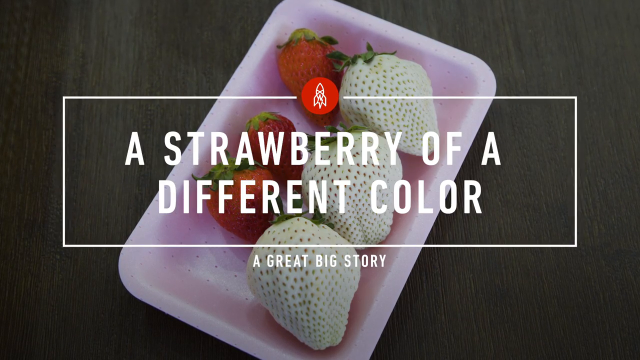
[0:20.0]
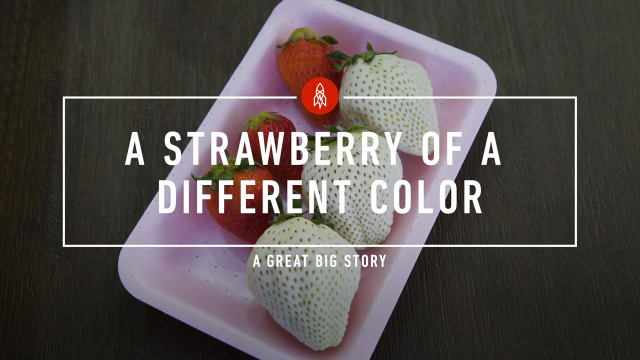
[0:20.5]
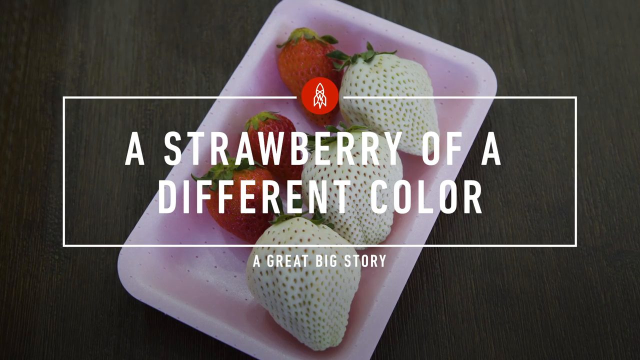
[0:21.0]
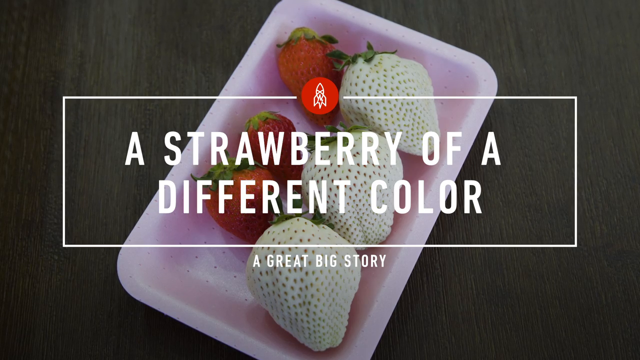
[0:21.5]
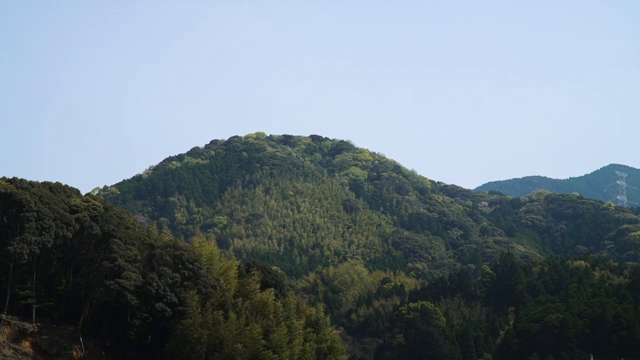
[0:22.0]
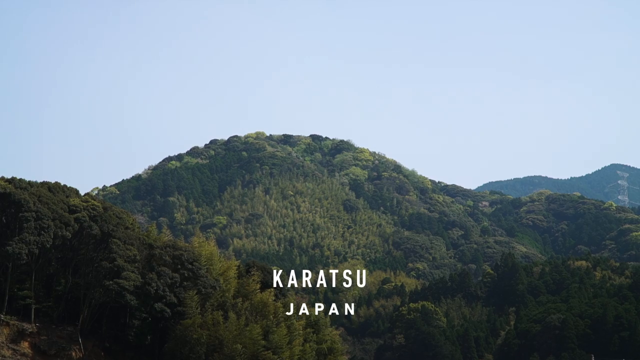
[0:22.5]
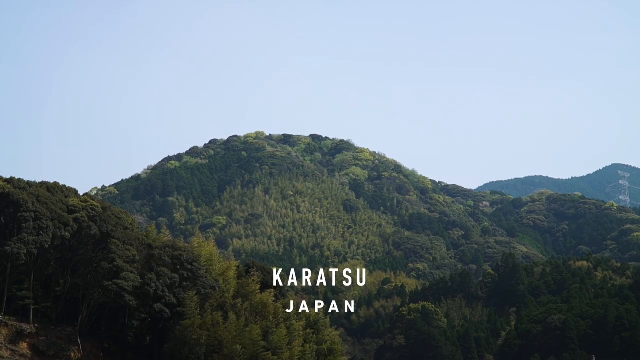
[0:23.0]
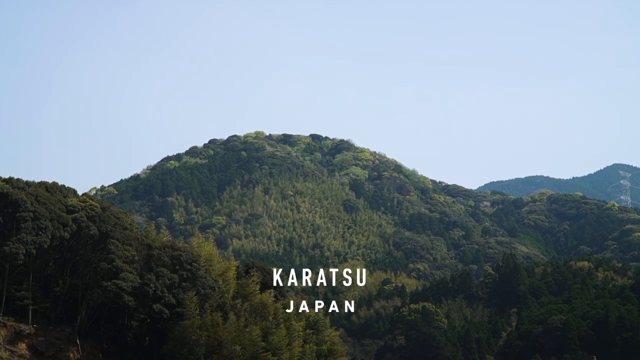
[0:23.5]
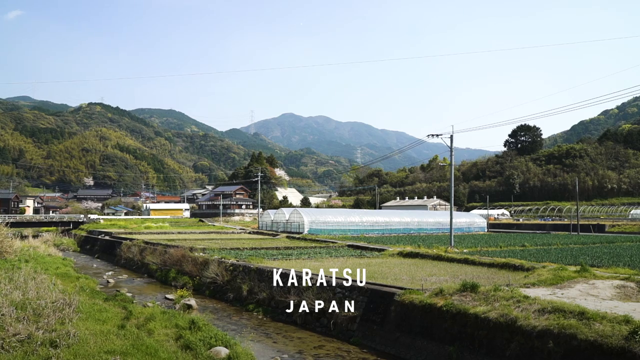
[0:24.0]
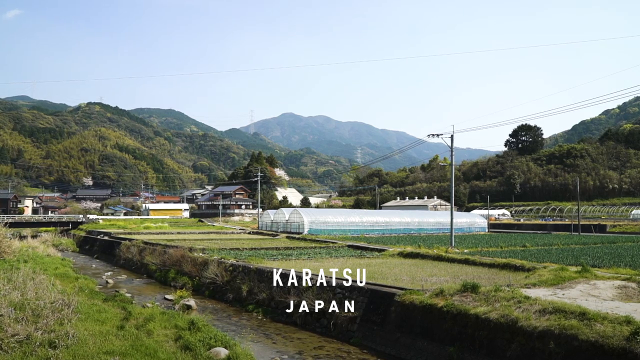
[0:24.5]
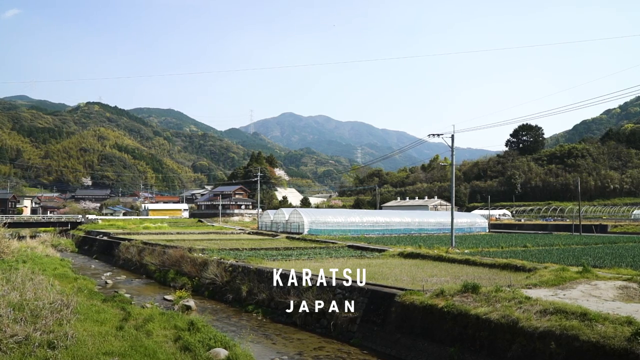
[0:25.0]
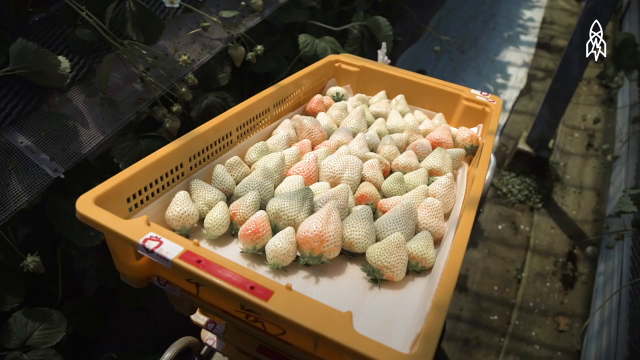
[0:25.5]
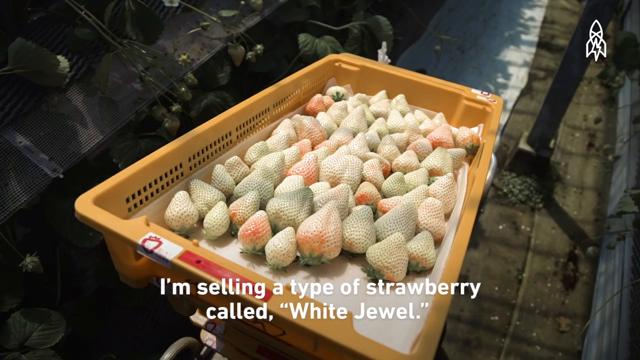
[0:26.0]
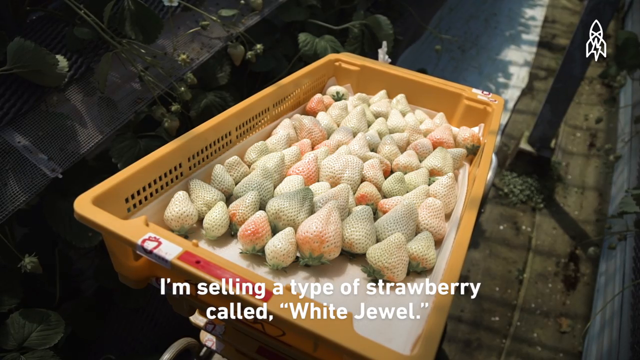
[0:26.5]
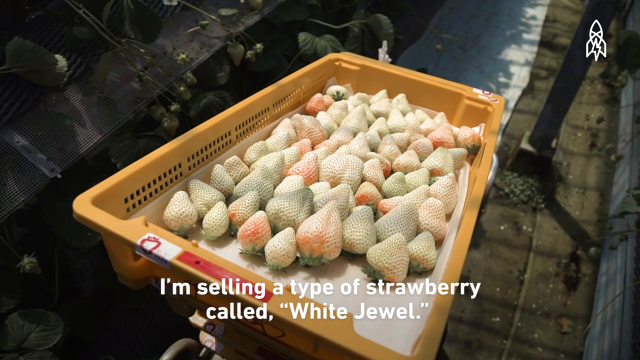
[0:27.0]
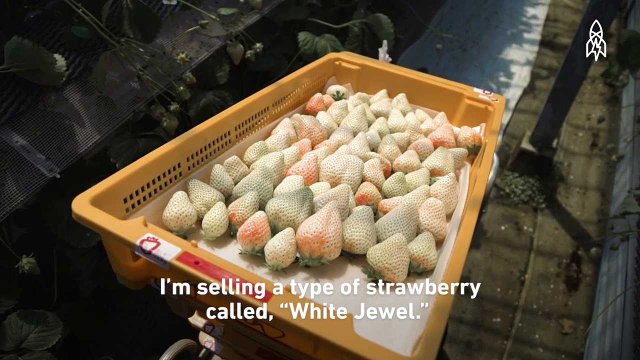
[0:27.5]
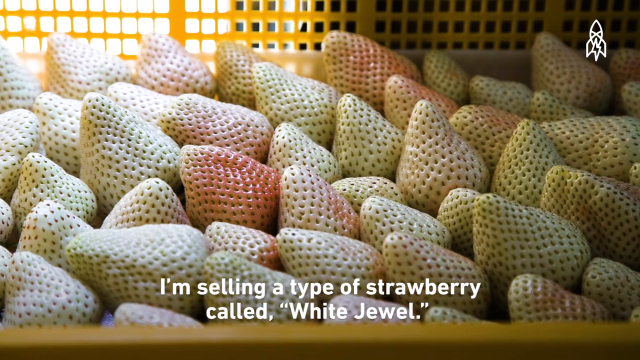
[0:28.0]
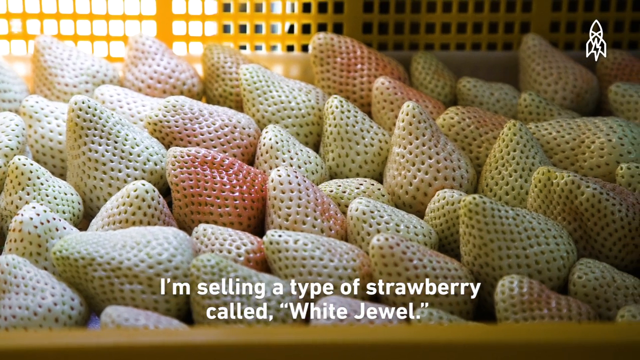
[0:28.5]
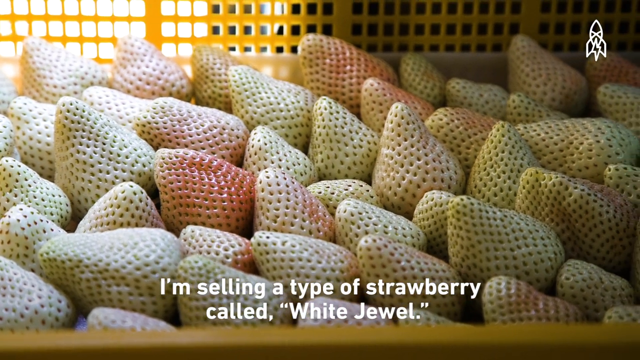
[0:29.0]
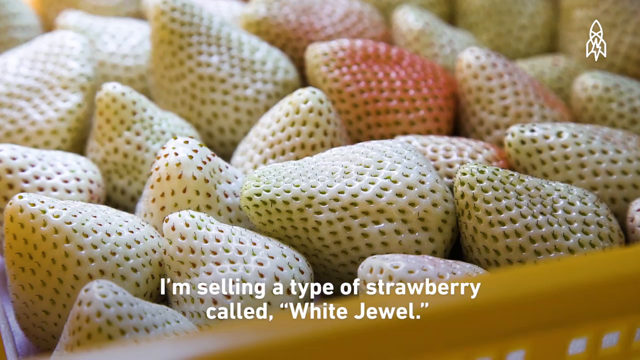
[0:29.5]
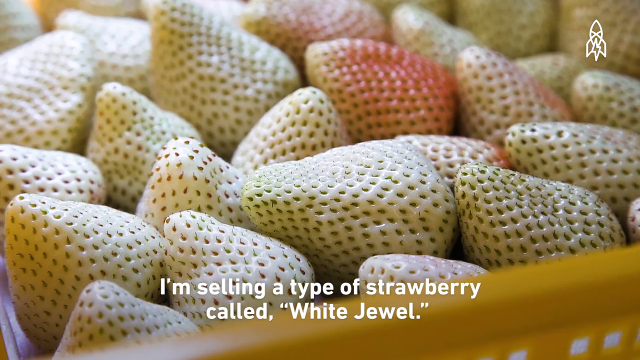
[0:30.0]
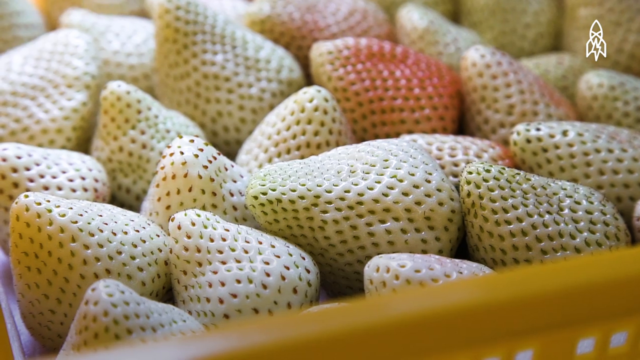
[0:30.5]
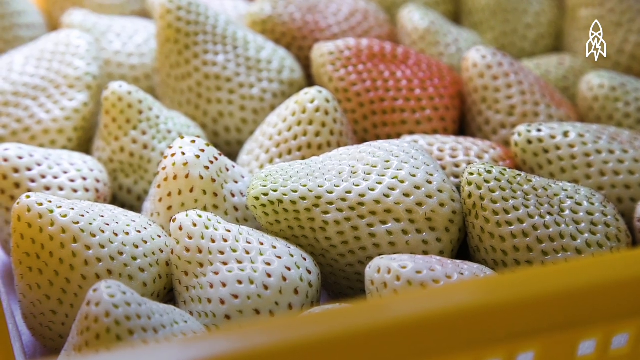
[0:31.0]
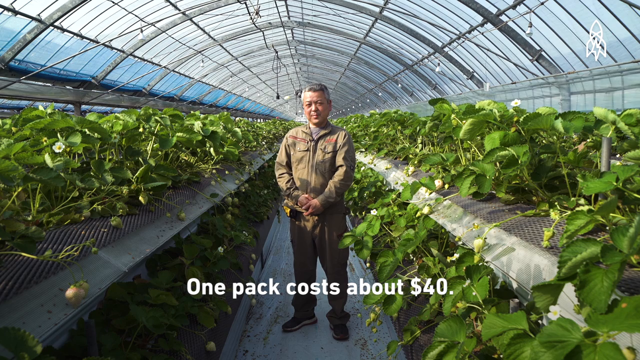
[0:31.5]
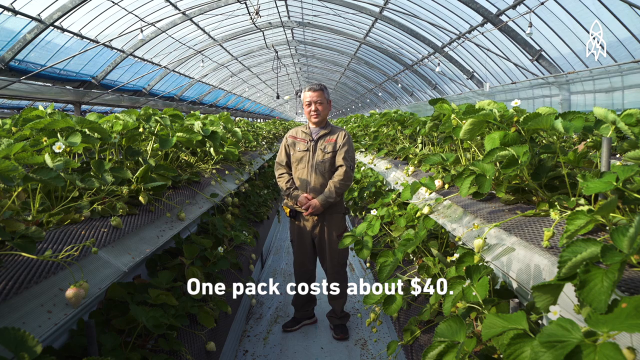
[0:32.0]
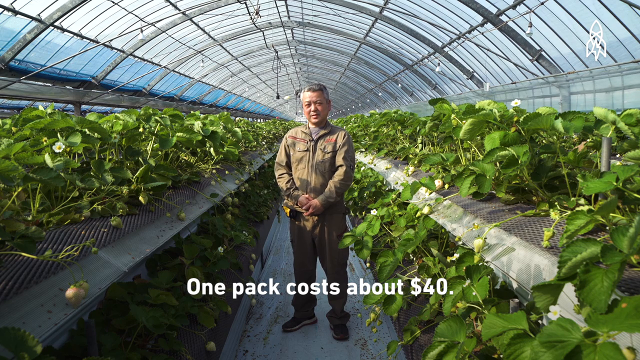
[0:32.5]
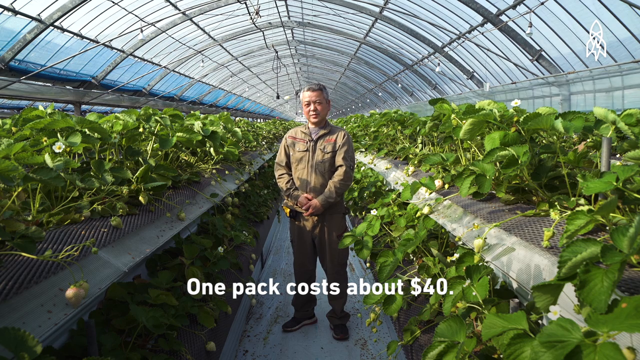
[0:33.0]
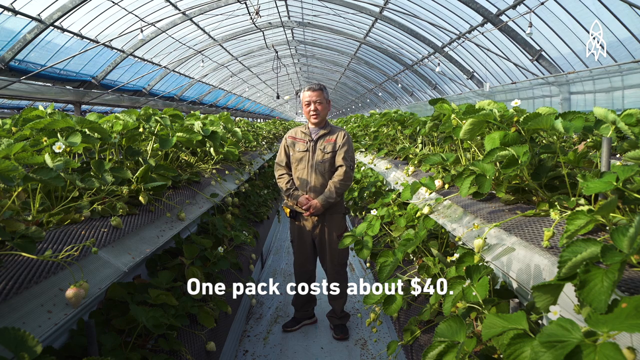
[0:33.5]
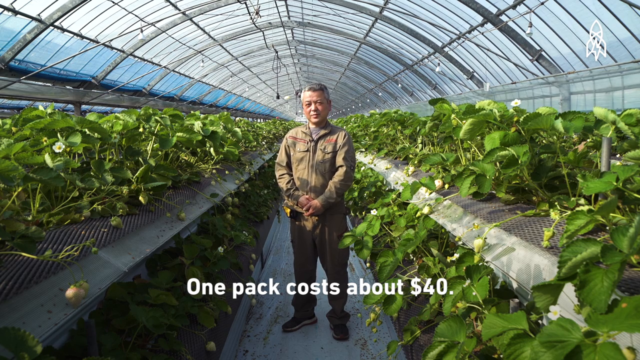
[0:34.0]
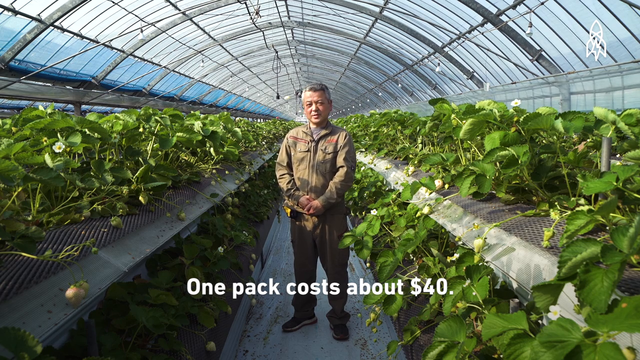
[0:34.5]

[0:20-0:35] The documentary takes place in Karatsu, Japan. The scene begins with cityscapes of Karatsu featuring irrigation systems and plentiful mountains. Strawberries are shown being harvested in bins, and Mr. Tashima stands proudly in his greenhouse among many strawberries. The words "A Strawberry of a Different Color" cycle at the end. It appears to be part of a series called A Great Big Story.